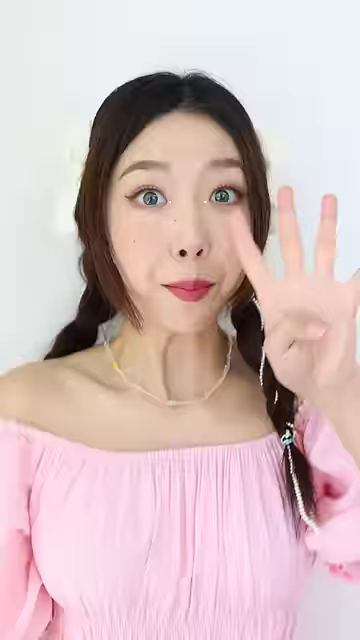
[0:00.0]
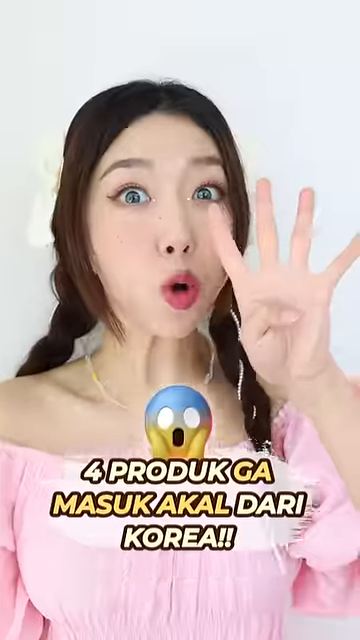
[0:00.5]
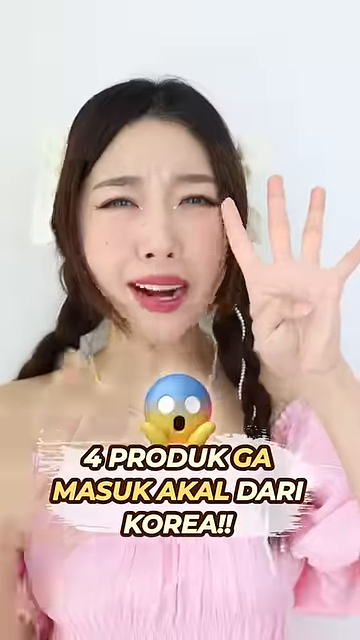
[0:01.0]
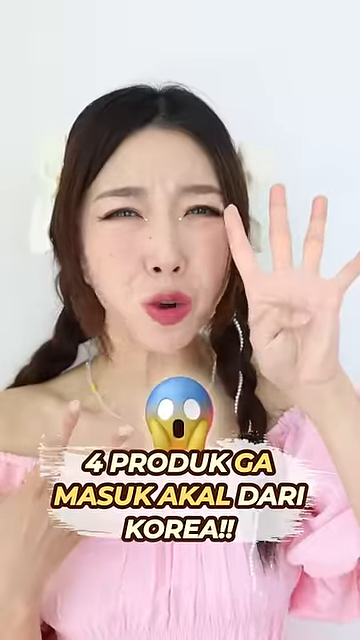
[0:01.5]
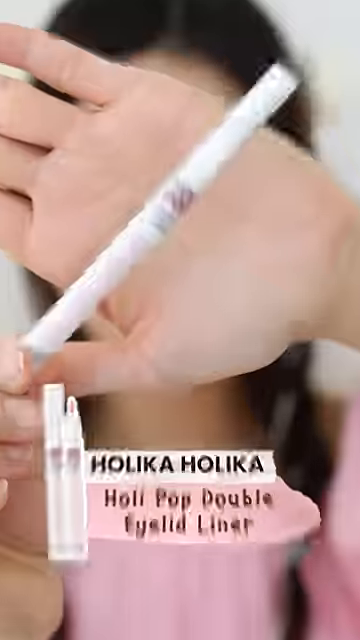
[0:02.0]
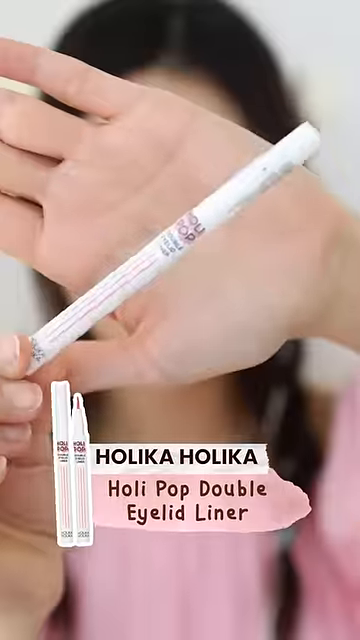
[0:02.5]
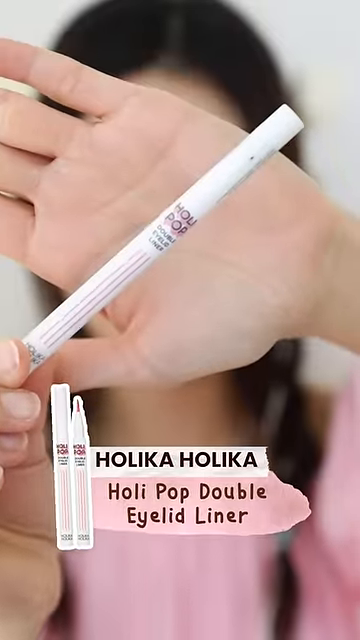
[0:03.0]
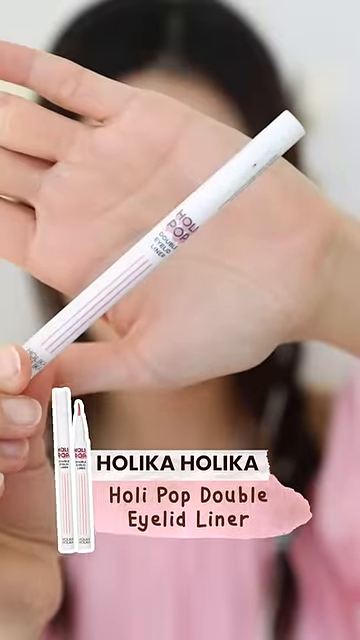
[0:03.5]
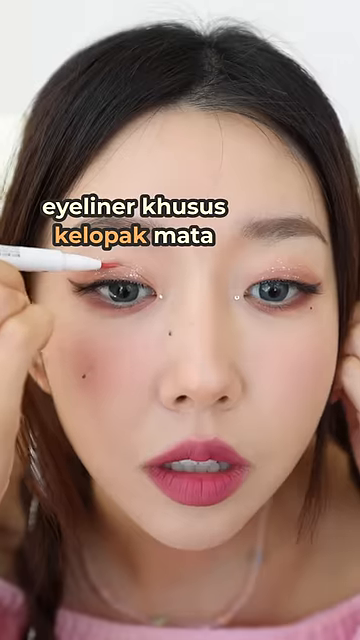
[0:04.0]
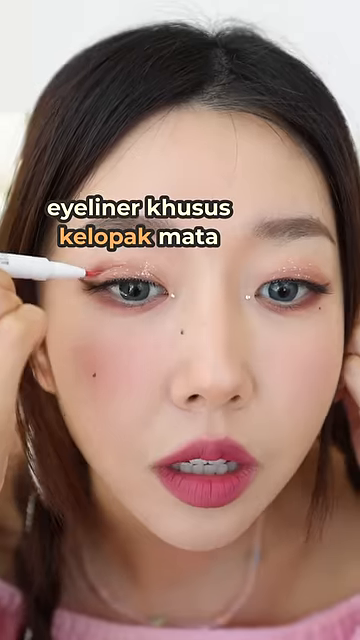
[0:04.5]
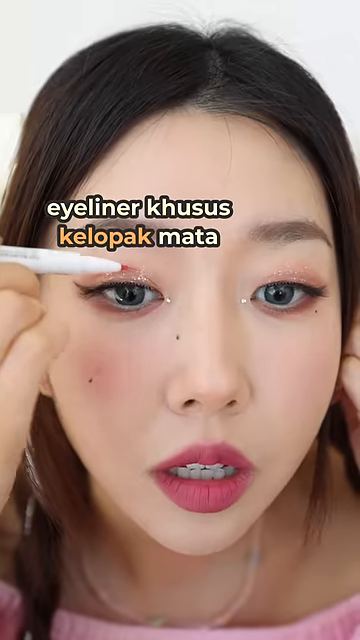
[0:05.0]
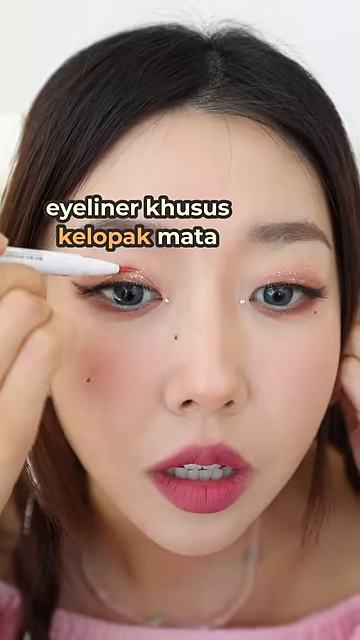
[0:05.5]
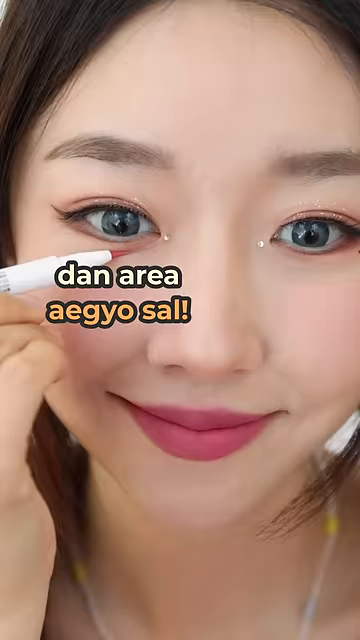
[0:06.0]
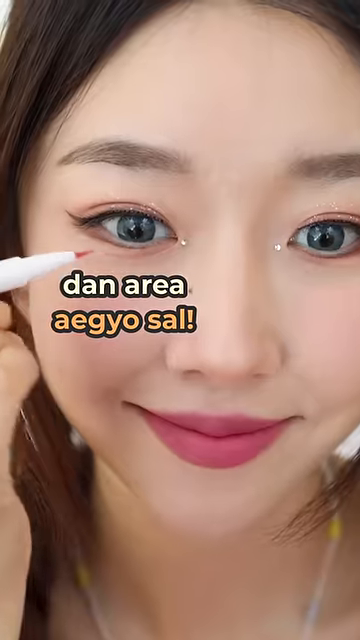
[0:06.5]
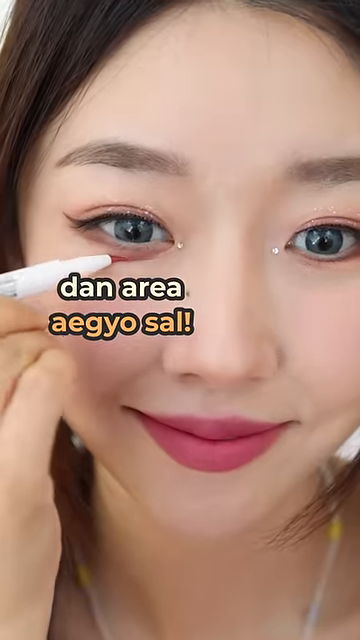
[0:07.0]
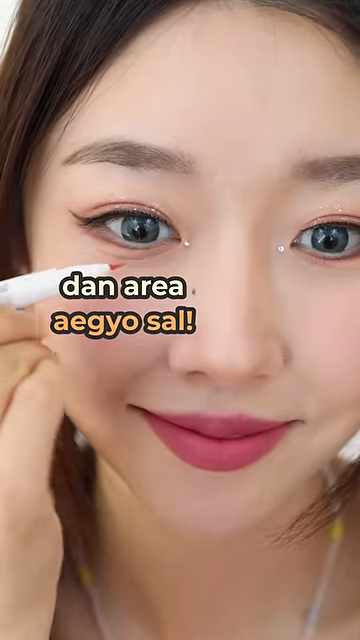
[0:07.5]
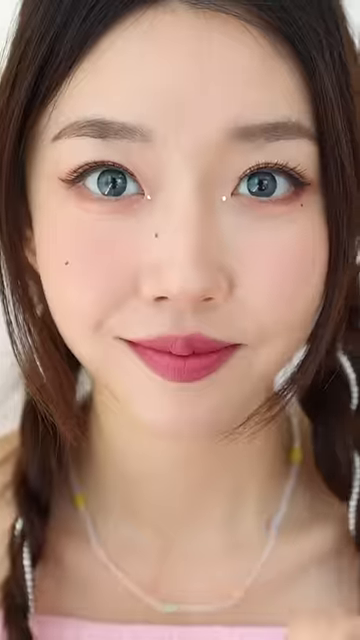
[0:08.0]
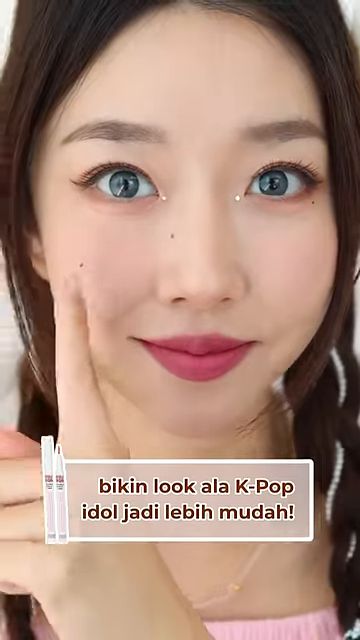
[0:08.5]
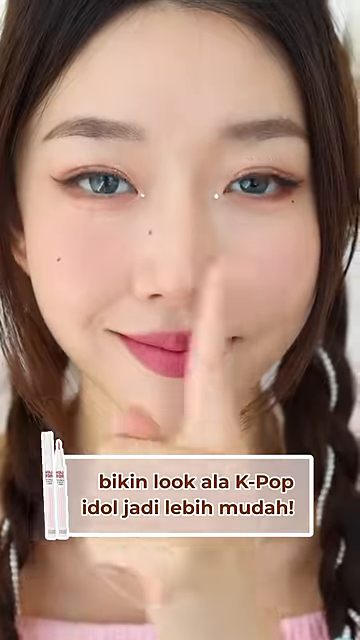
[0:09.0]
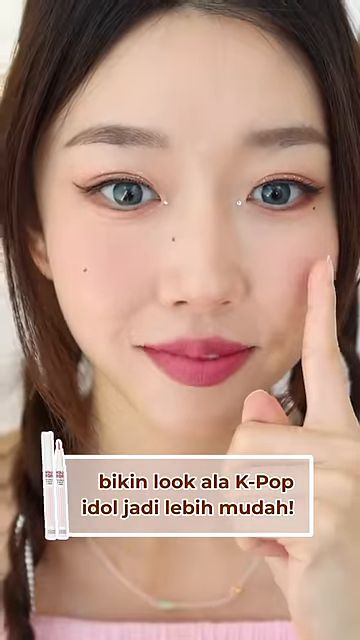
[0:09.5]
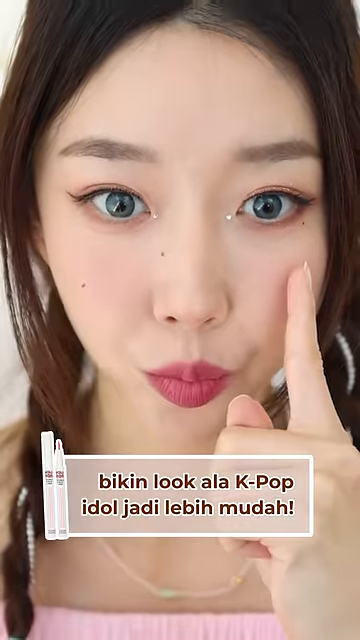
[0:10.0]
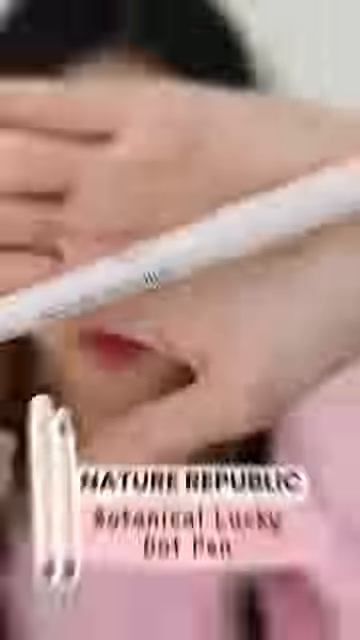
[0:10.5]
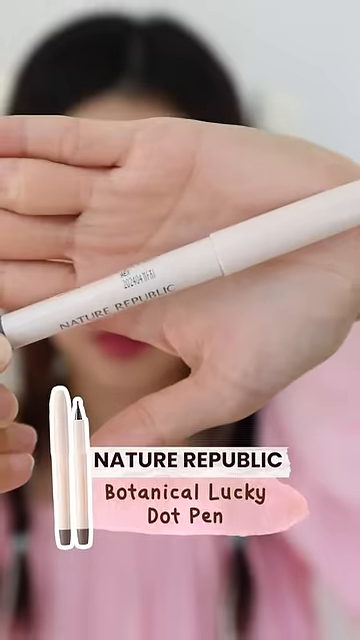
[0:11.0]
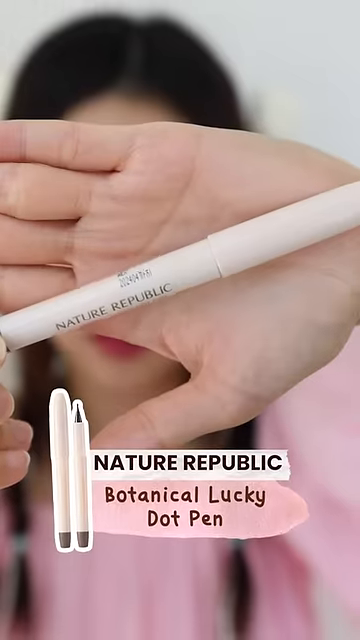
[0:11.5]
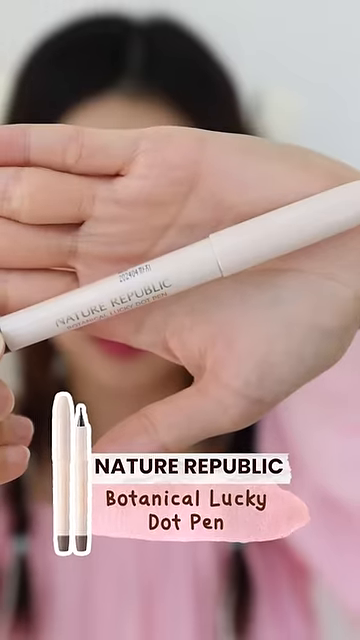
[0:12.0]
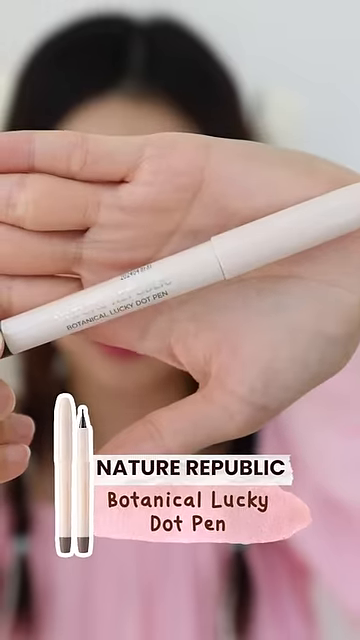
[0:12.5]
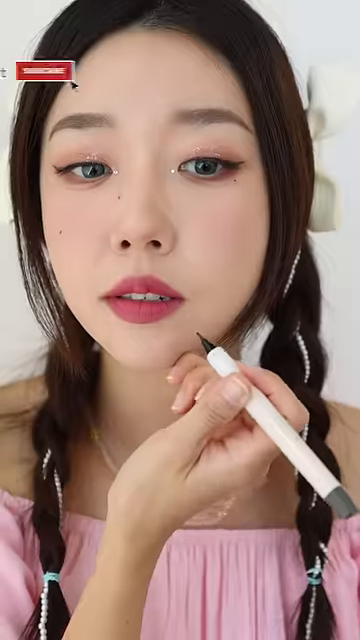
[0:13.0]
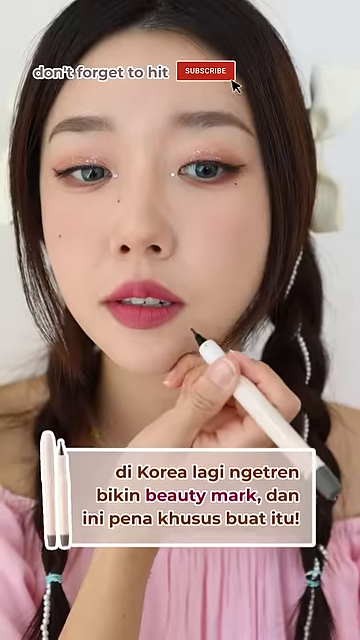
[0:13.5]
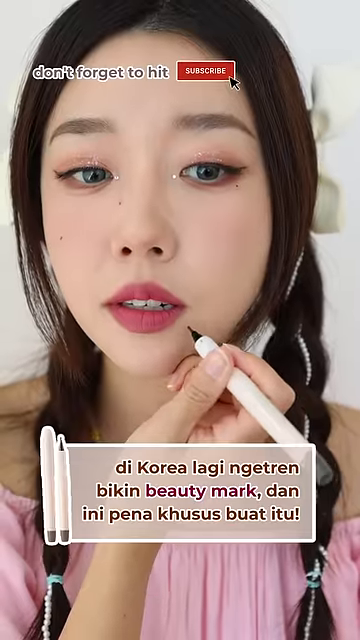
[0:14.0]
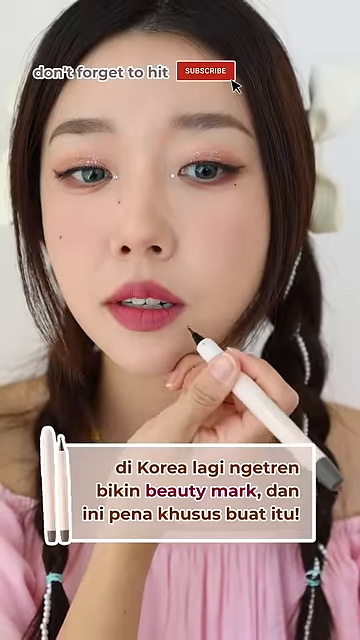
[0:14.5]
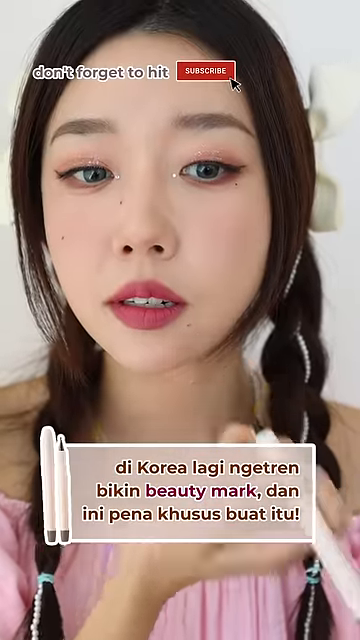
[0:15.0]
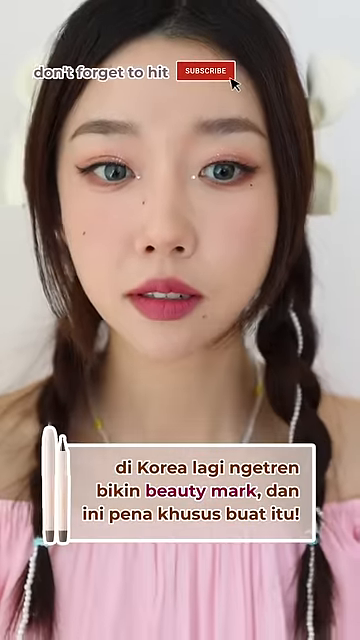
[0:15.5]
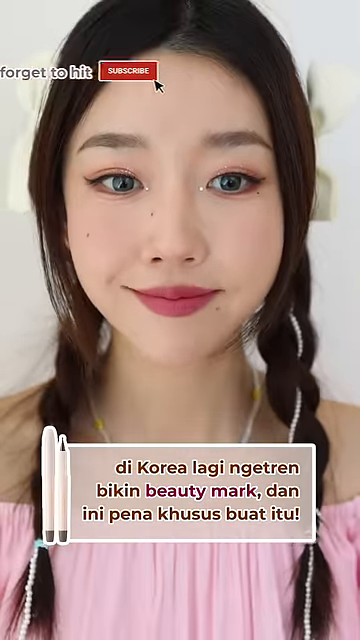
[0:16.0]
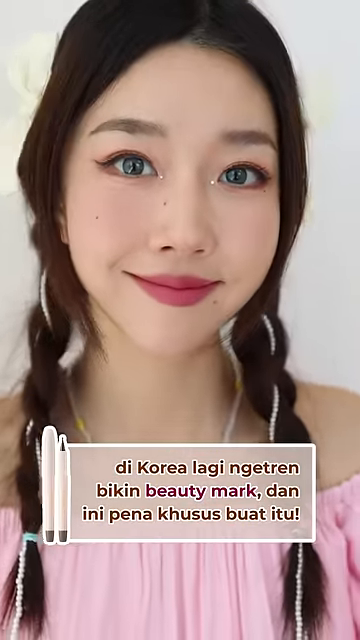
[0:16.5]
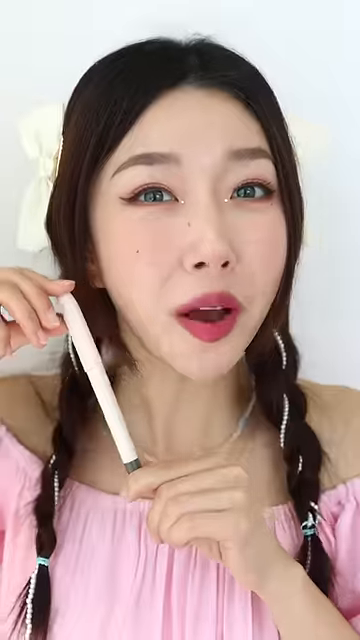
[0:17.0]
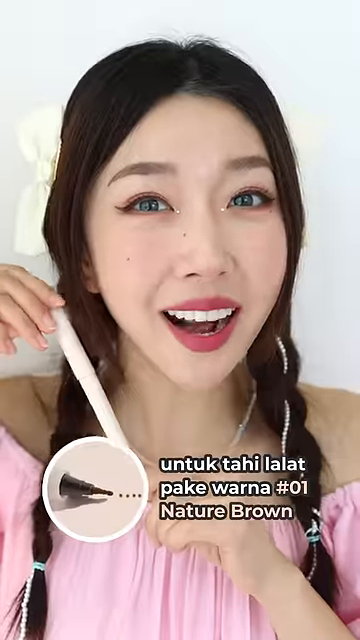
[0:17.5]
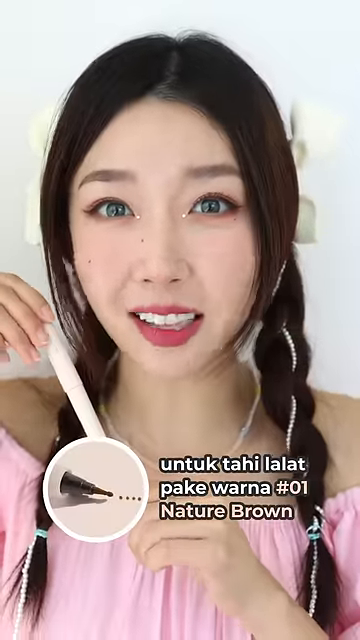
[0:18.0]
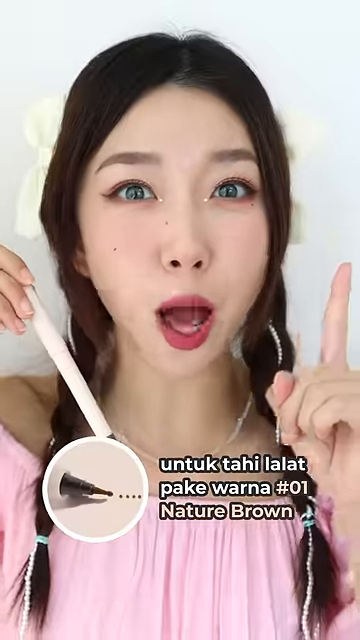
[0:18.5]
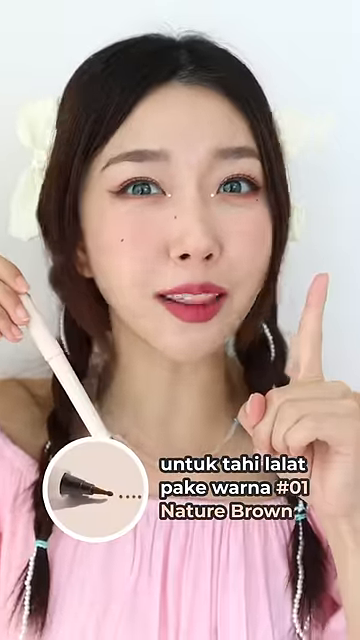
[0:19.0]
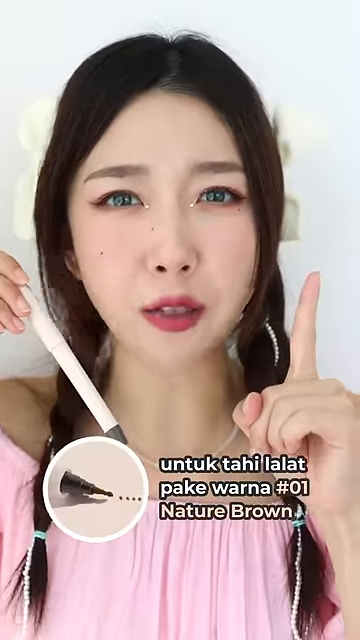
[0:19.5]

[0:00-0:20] What appears to be a young Asian influencer demonstrates some makeup techniques and products. She begins holding up four fingers as she speaks very animatedly to the camera, almost with a look of disbelief or unpleasantness. Foreign text appears underneath, most likely describing the content of the video. The video changes to a close-up of her holding a white, stick-like eyeliner product in front of her palm, and a small image of the product appears at the bottom of the screen; it seems to be called Holika Holika Holi Pop Double Eyeliner. A close-up of her face follows as she applies the eyeliner onto the crease of her right eye and along the outline of the bottom part of her eye, highlighting the little fat underneath the eye known as aegyosal. She then kind of looks at the camera and points to each of her eyes, showing the before-and-after difference. Next comes a zoomed-in view of another white, pencil- or pen-like makeup product held in front of her palm. At the bottom the screen reads "Nature Republic," and underneath it "Botanical Lucky Dot Pen." With this pen she draws a very small beauty mark underneath the side of her lip. She also has a few more beauty marks drawn on her face, on her nose and upper cheek, as she shows how to use the product to draw beauty marks.